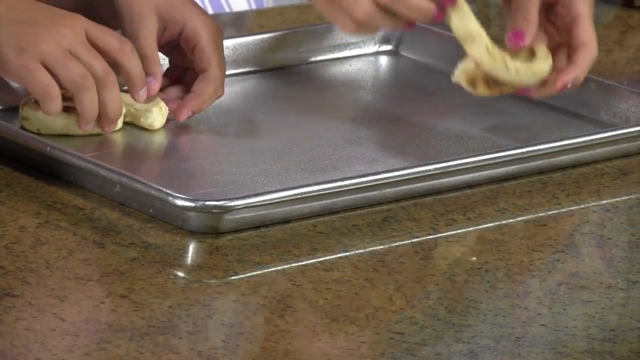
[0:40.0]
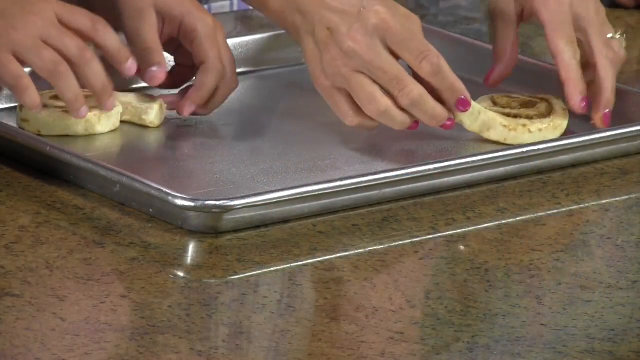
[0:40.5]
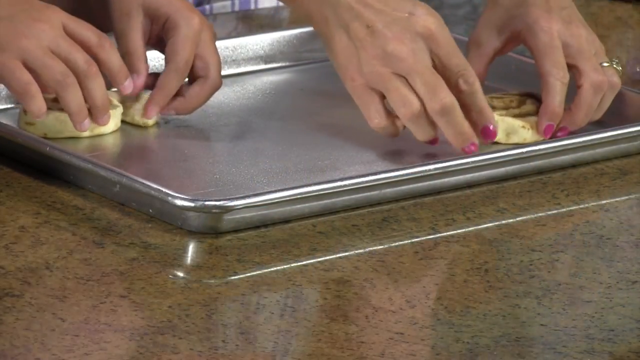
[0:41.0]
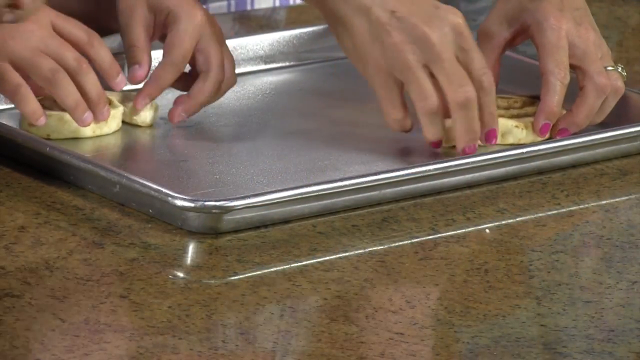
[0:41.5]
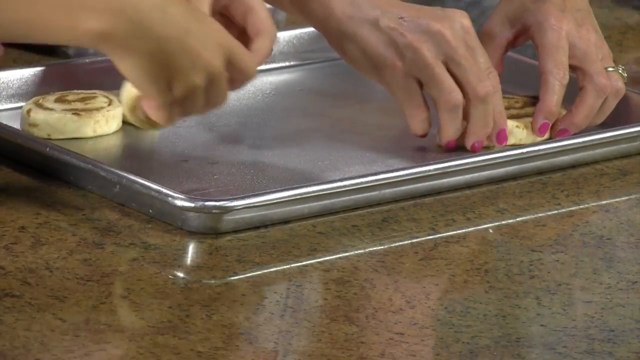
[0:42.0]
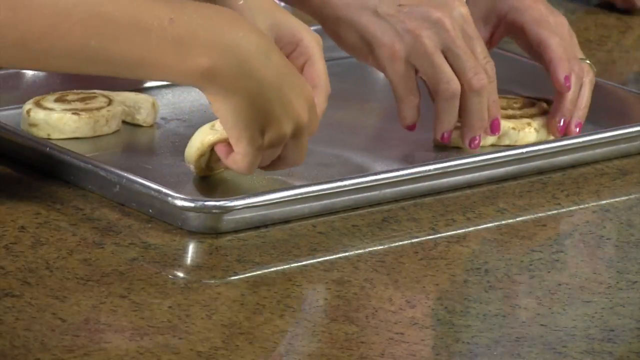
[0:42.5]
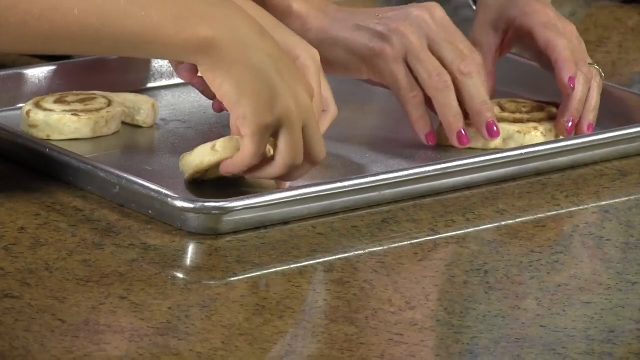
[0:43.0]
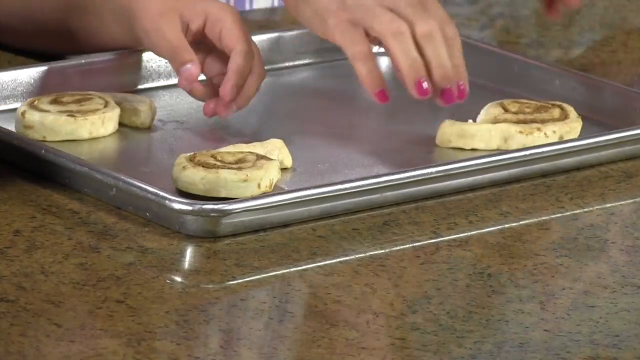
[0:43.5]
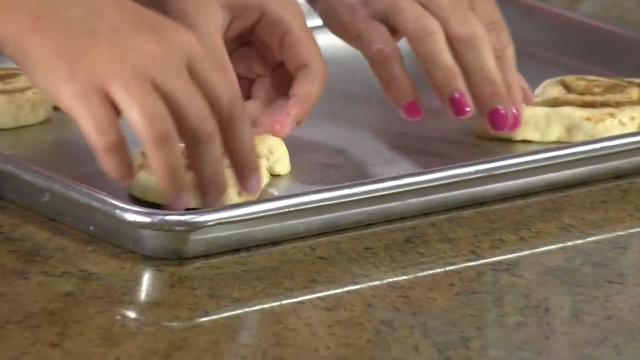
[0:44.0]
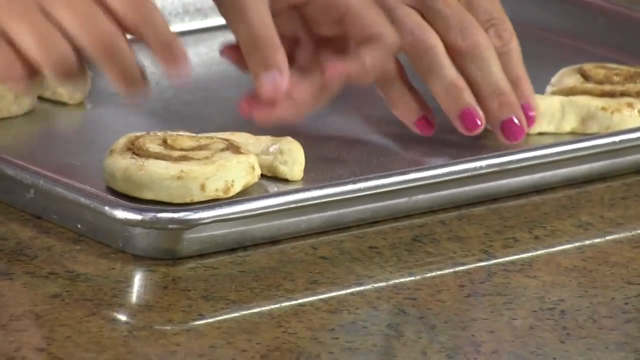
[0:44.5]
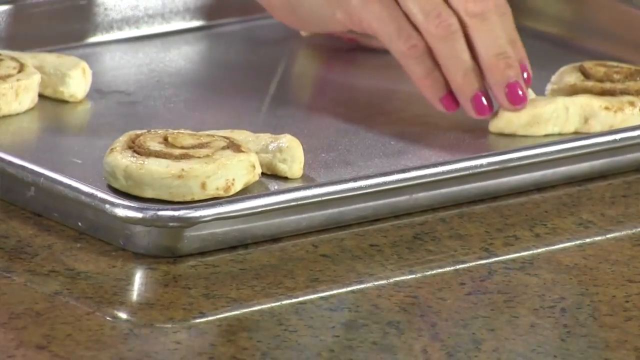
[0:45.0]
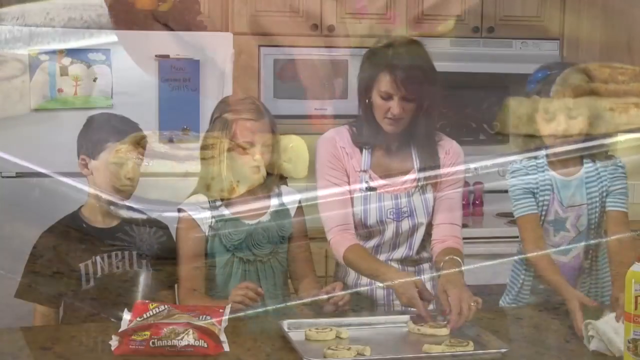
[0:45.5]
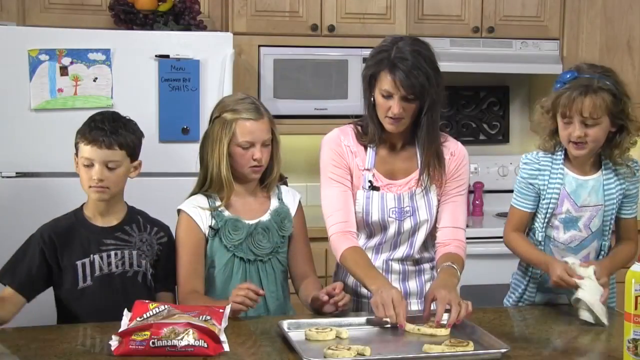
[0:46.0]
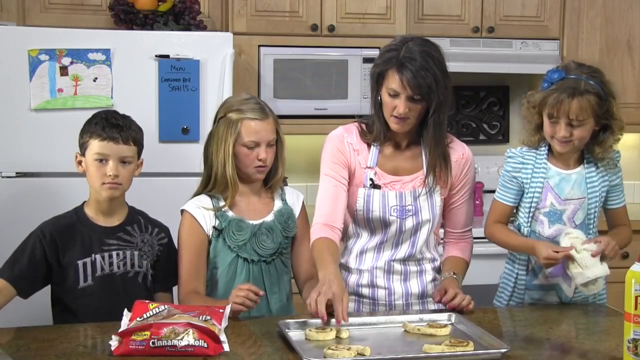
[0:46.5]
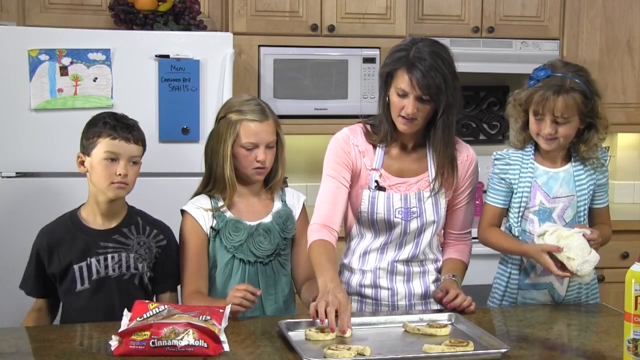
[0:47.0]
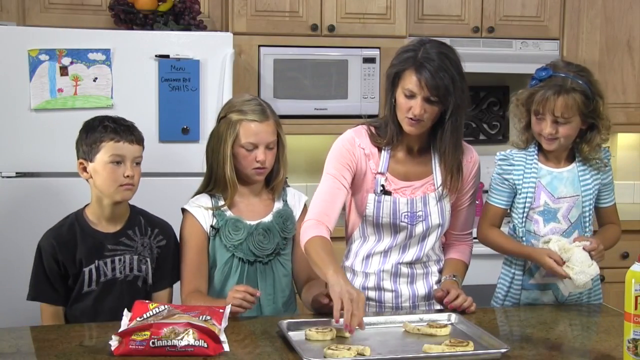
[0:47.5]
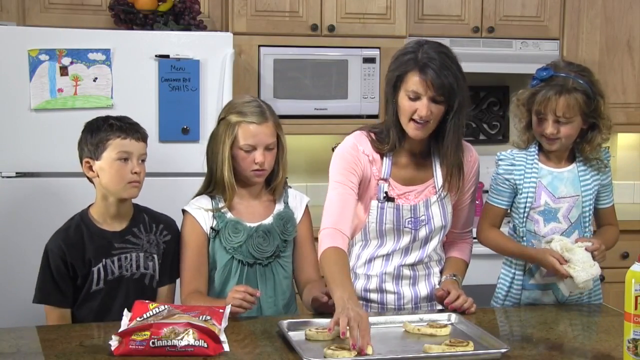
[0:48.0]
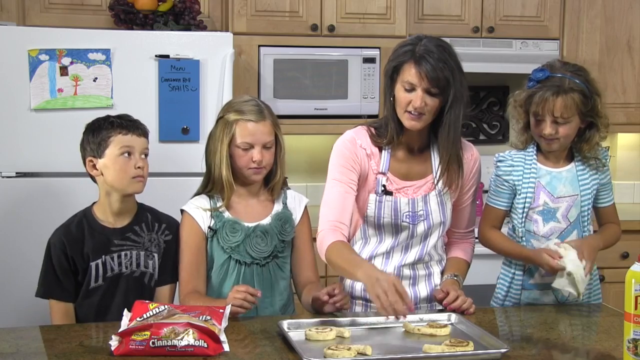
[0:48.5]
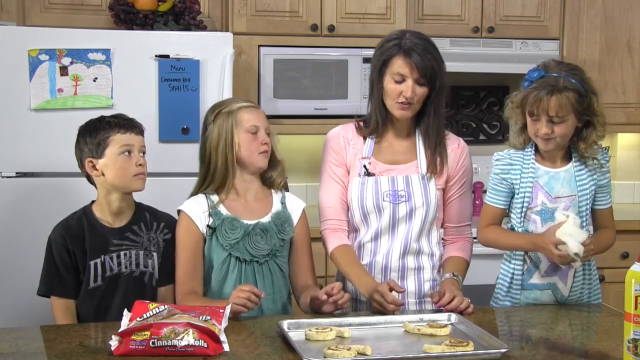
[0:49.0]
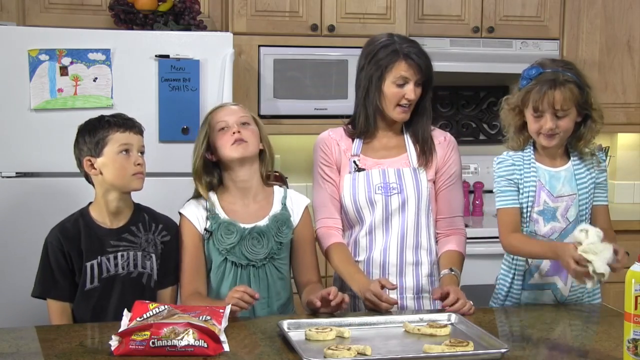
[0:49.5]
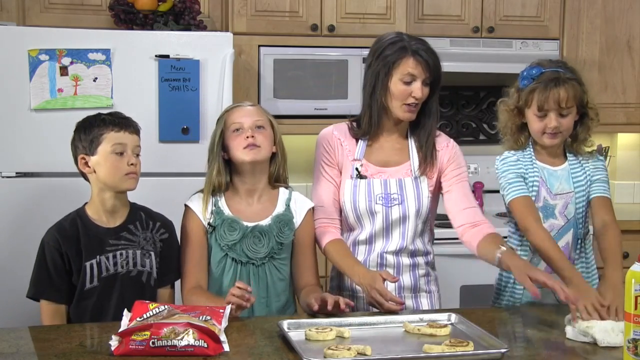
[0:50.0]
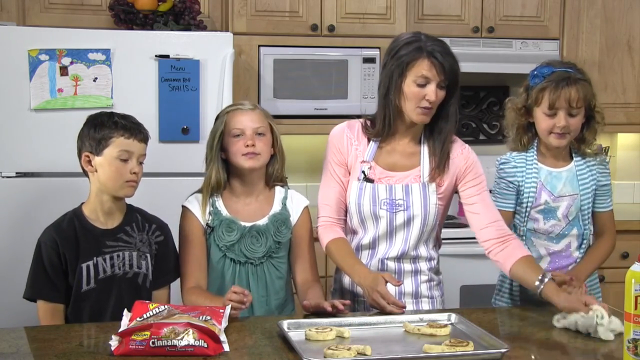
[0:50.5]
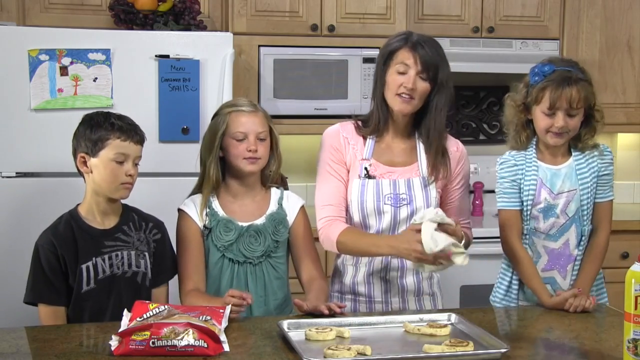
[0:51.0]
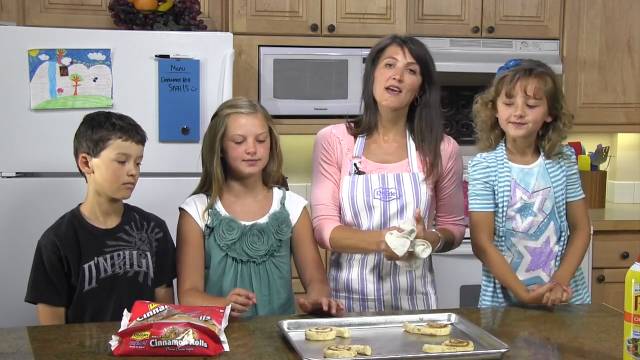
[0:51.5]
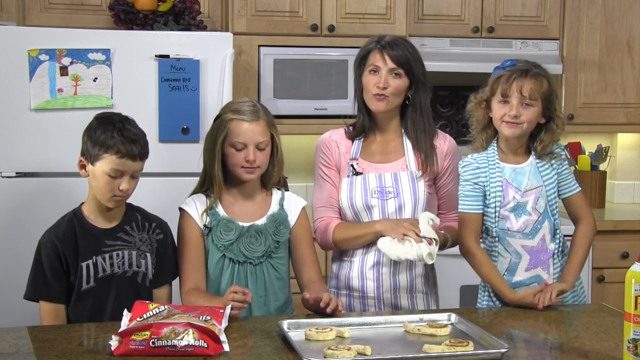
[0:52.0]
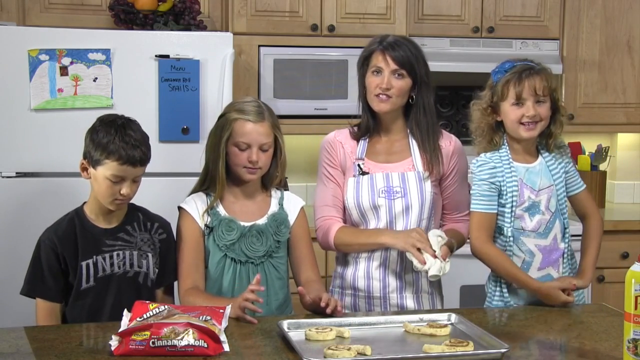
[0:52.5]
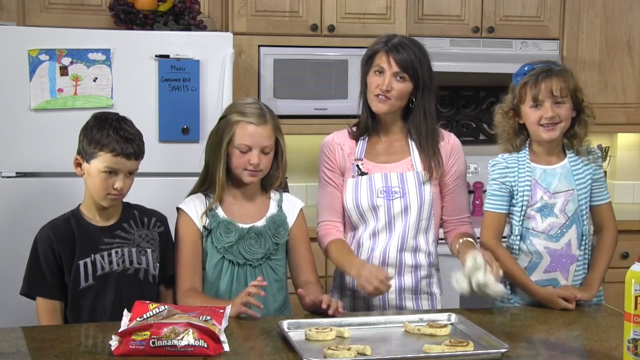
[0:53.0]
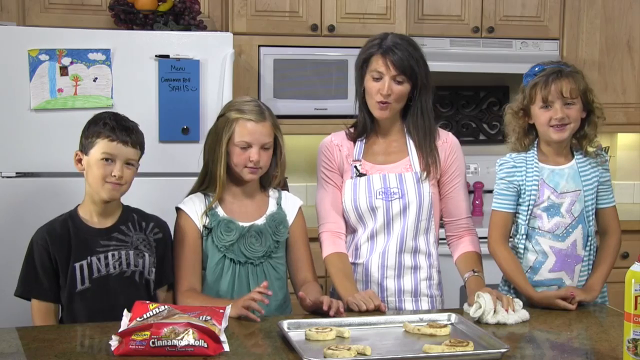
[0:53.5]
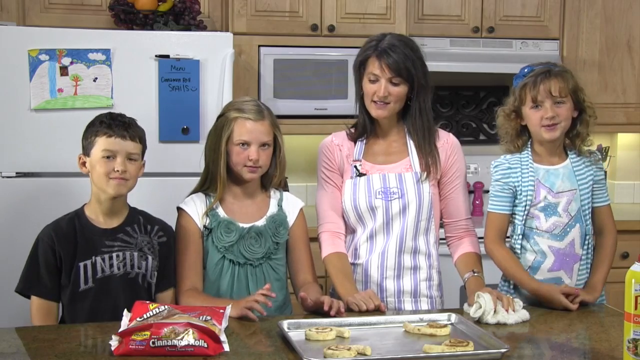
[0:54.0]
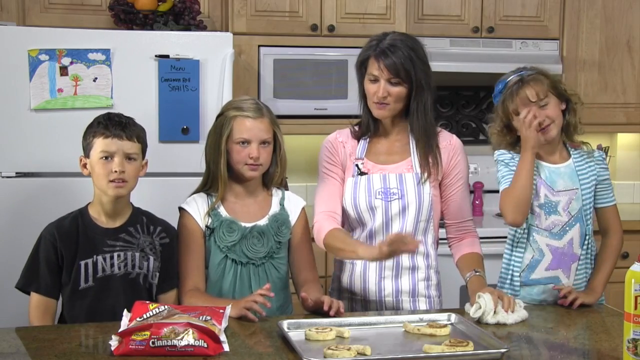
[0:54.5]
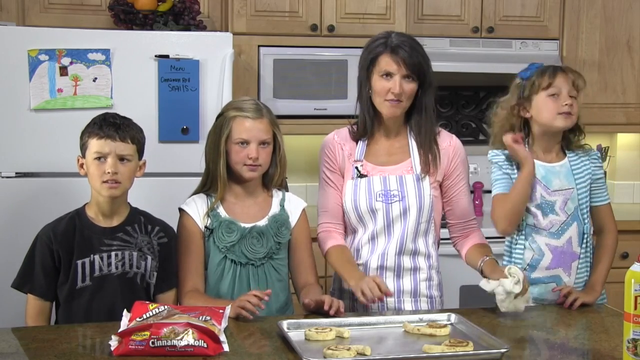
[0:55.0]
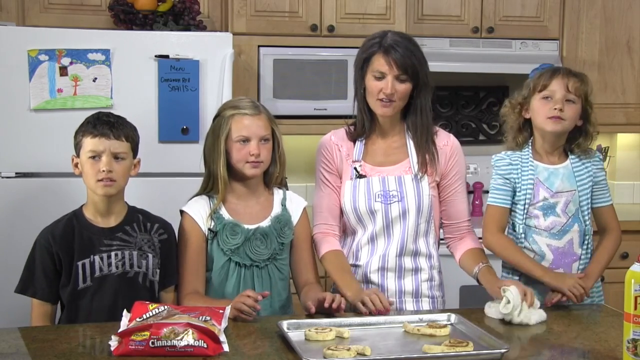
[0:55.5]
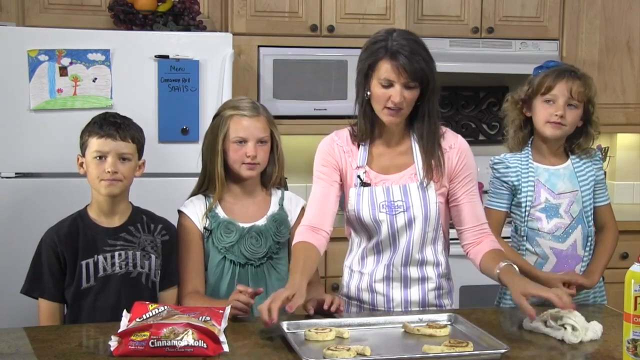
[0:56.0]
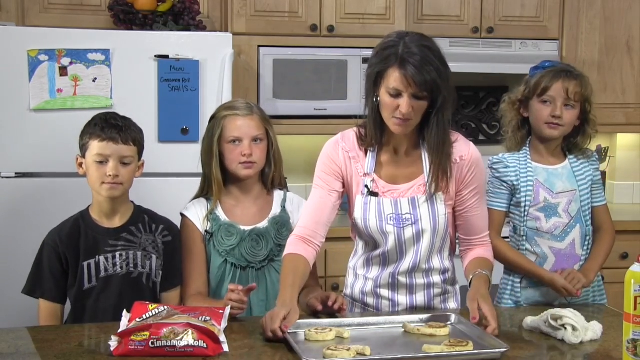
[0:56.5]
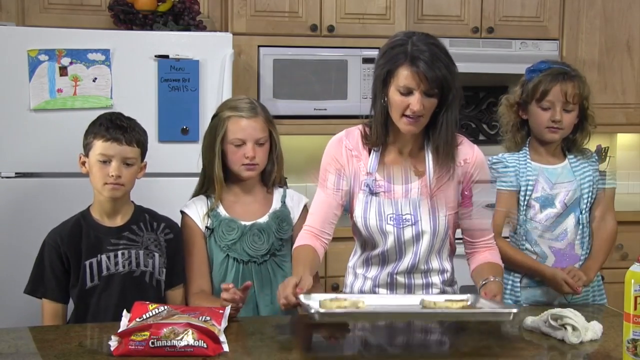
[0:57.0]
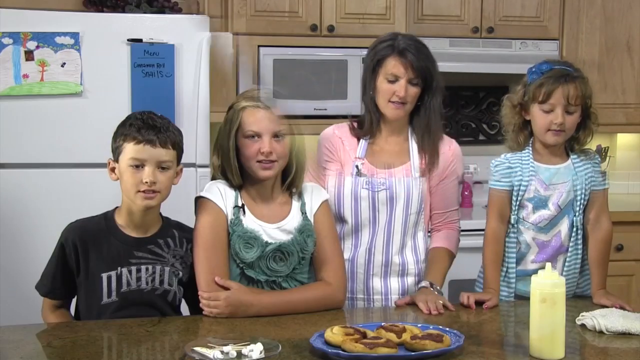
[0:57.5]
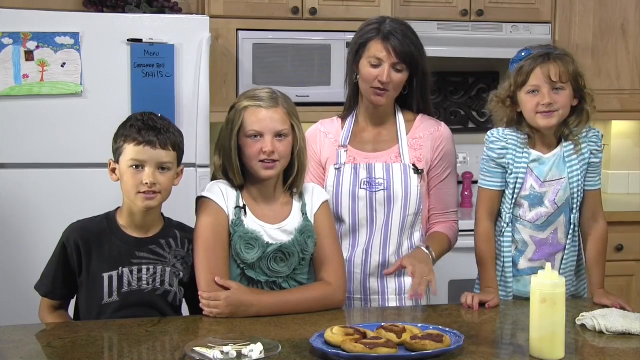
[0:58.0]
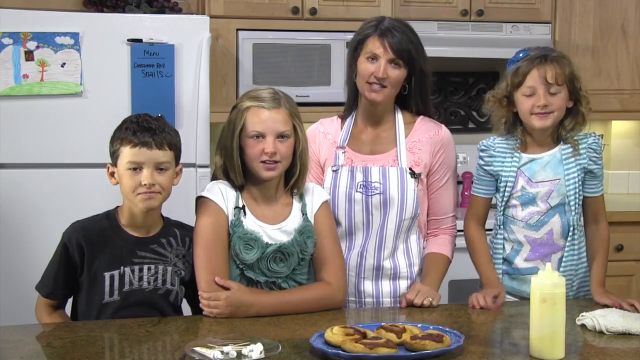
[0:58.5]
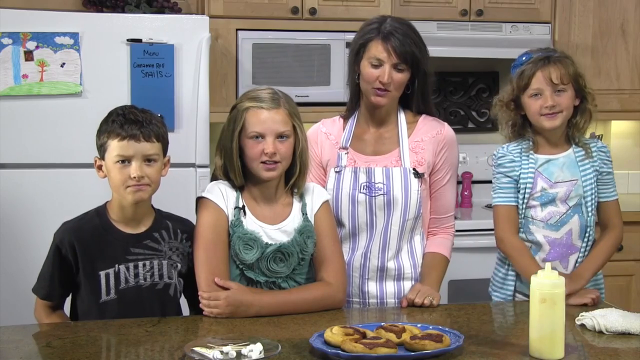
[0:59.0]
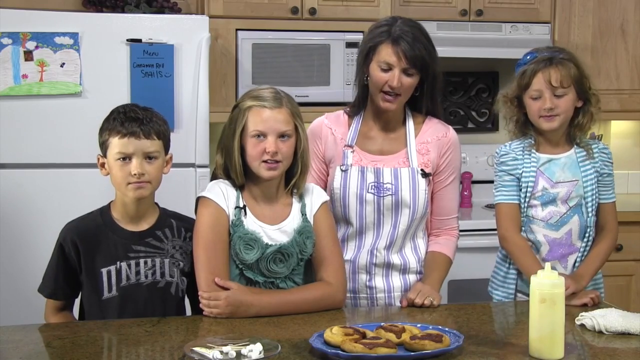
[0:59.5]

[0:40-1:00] Different hands place cinnamon rolls on the cooking pan. A closer view shows the mother's pink nail polish and tiny hands also placing their cinnamon rolls into the pan. The mother then wipes her hands, and the daughter to her left also washes her hands. What appears to be a timer slideshow is shown. The family then has their hands on the table while the mother seems to be explaining something. The cinnamon bag, in red packaging, is on the left-hand side. In front of them are a white and blue plate and what appears to be a sauce bottle, and the child on the right-hand side is smiling.